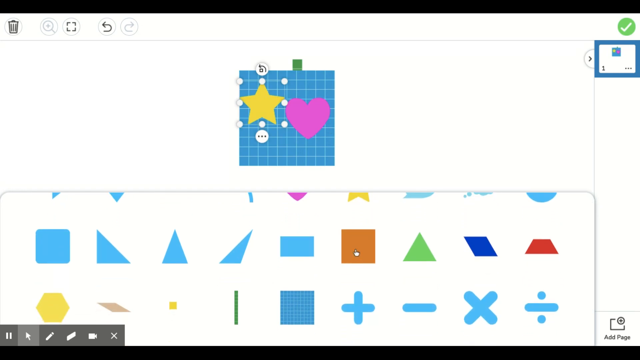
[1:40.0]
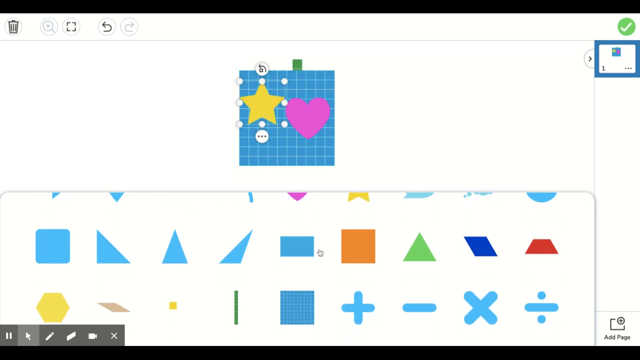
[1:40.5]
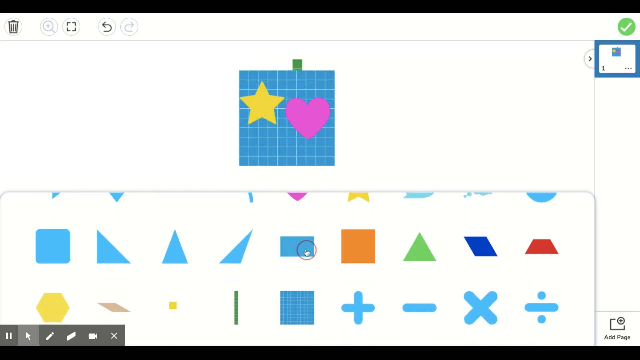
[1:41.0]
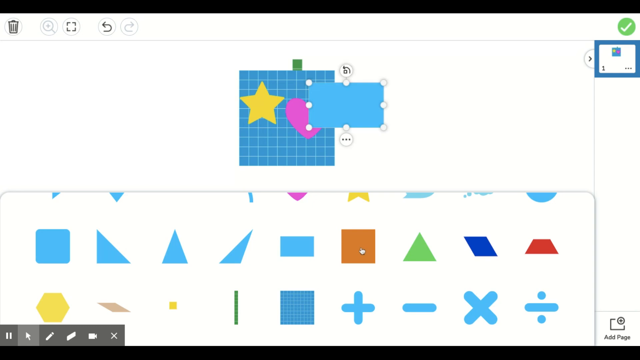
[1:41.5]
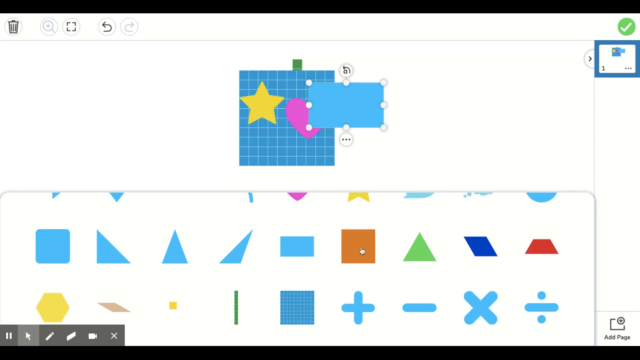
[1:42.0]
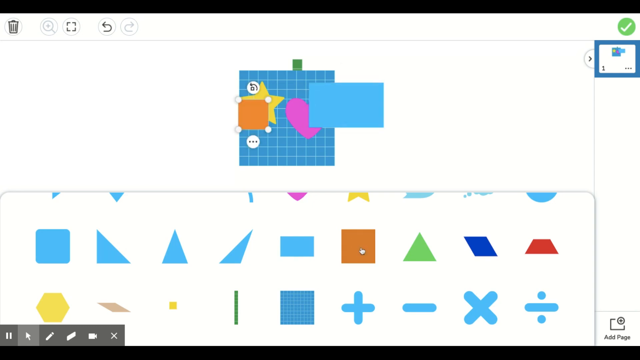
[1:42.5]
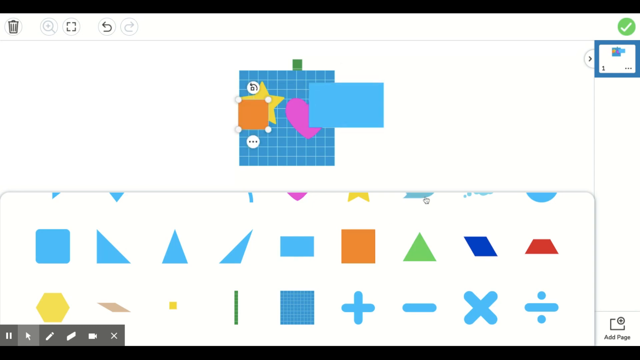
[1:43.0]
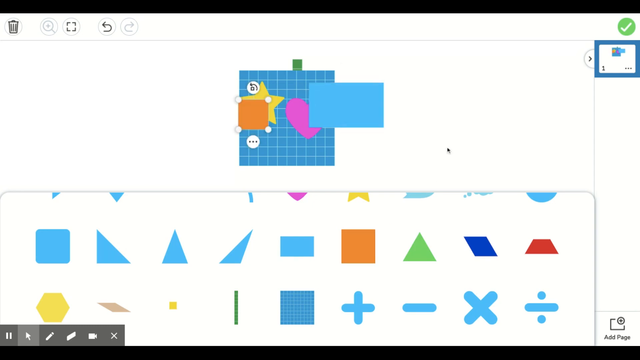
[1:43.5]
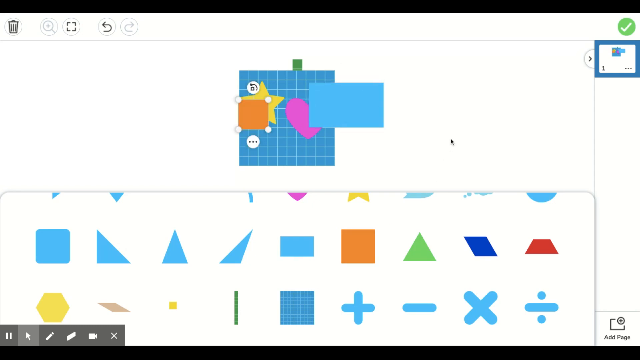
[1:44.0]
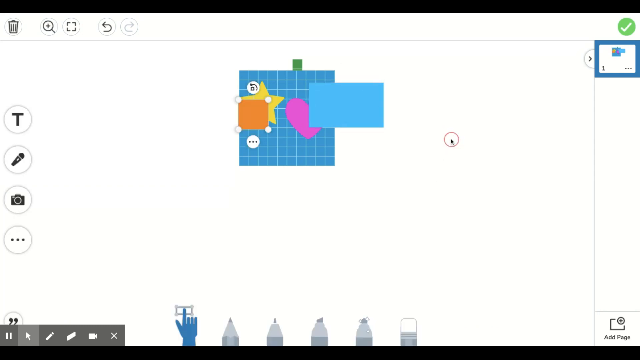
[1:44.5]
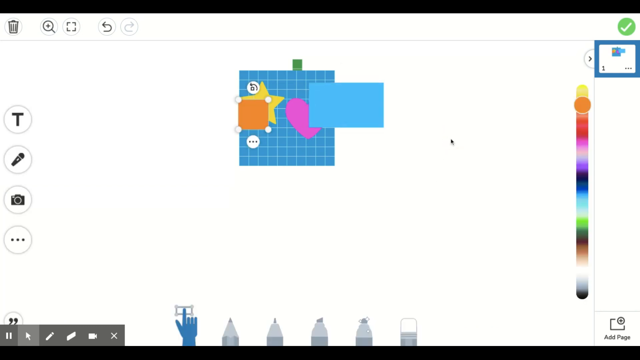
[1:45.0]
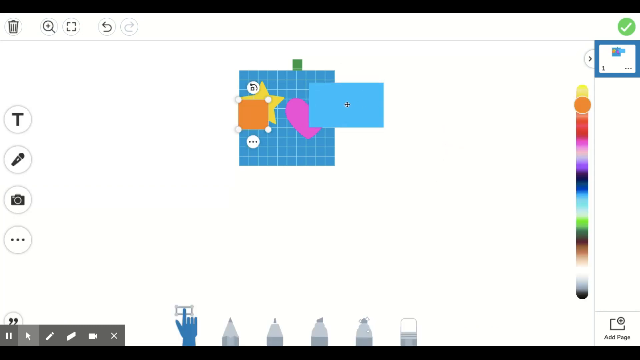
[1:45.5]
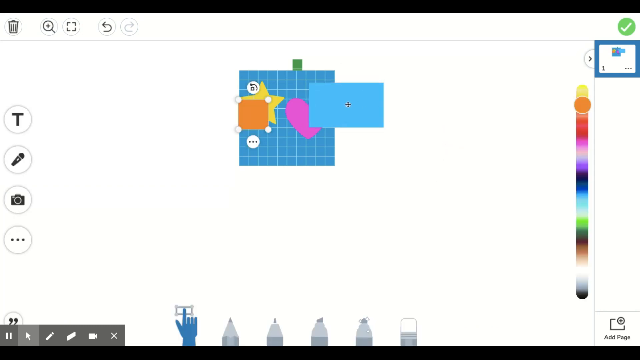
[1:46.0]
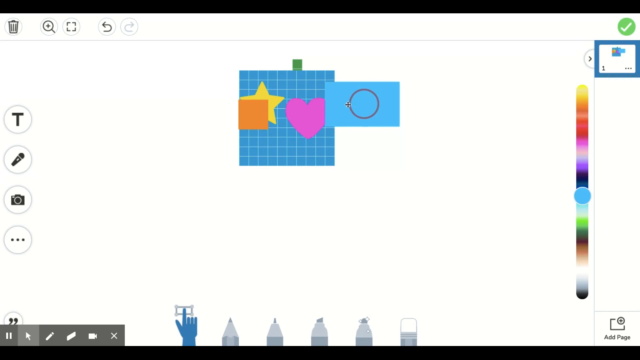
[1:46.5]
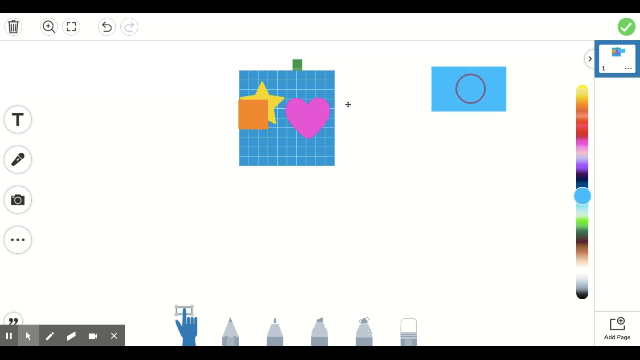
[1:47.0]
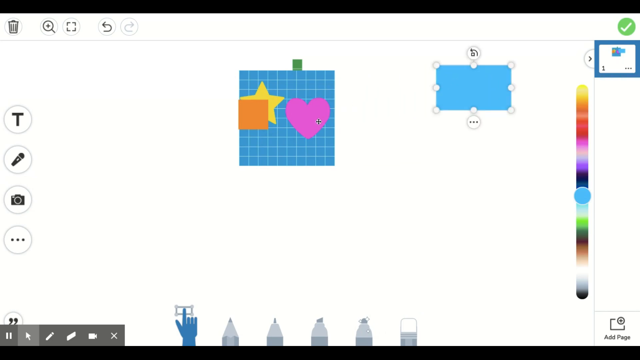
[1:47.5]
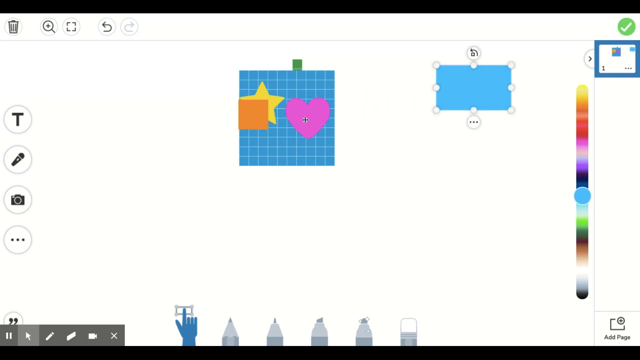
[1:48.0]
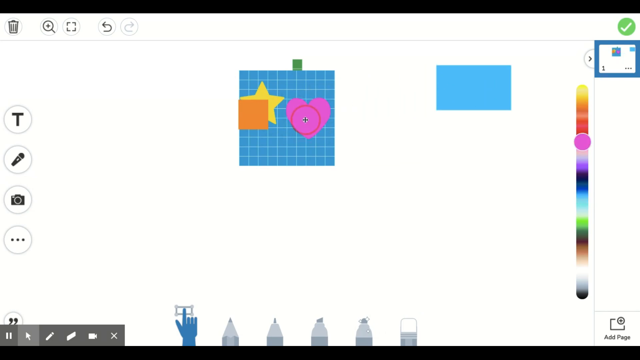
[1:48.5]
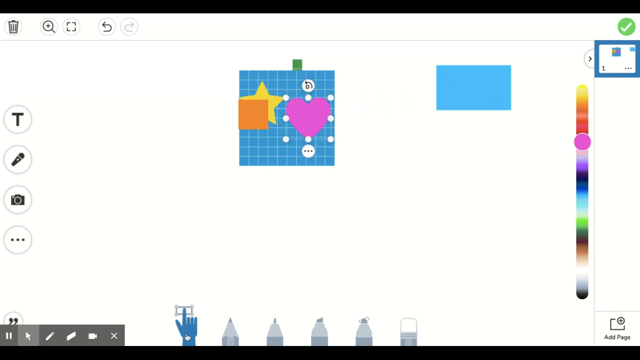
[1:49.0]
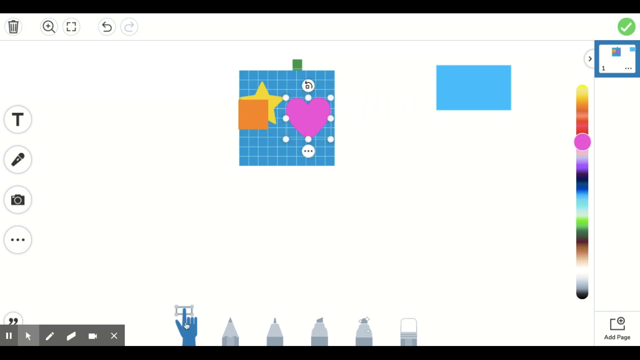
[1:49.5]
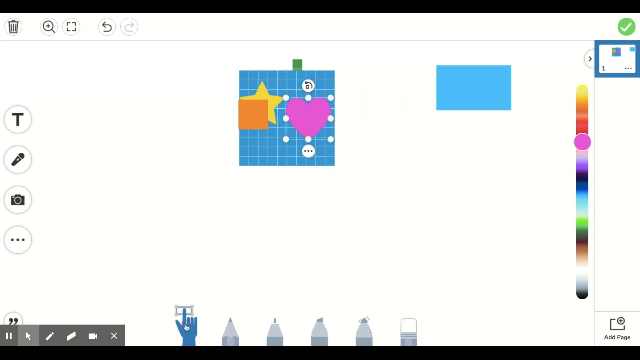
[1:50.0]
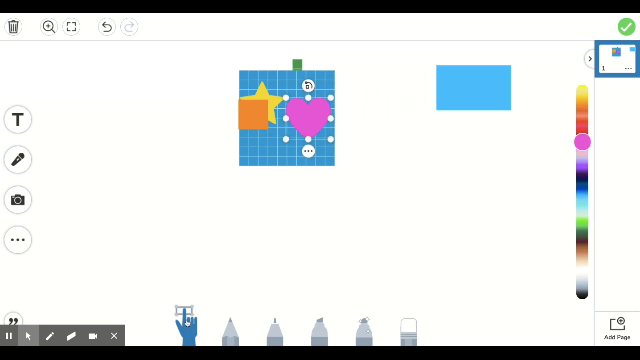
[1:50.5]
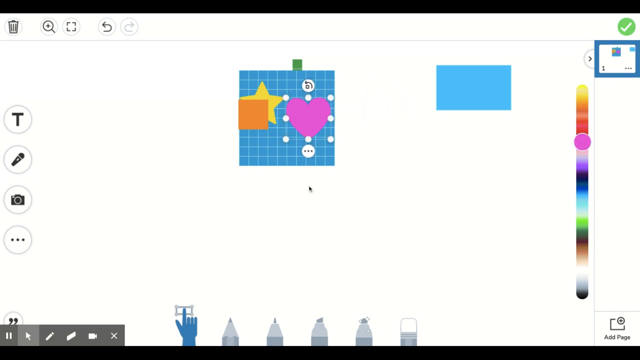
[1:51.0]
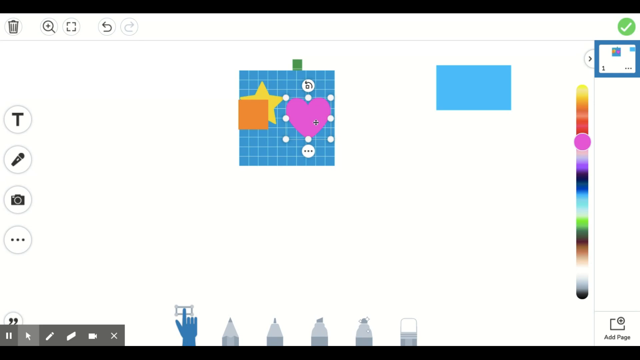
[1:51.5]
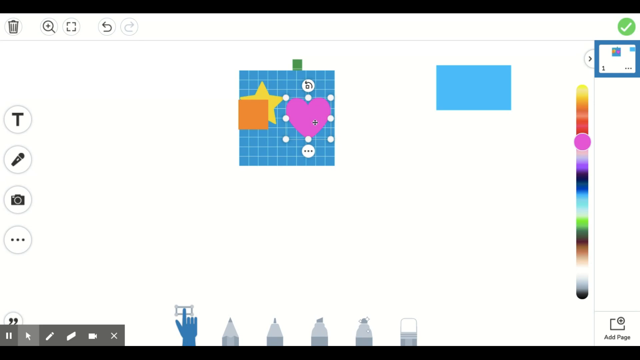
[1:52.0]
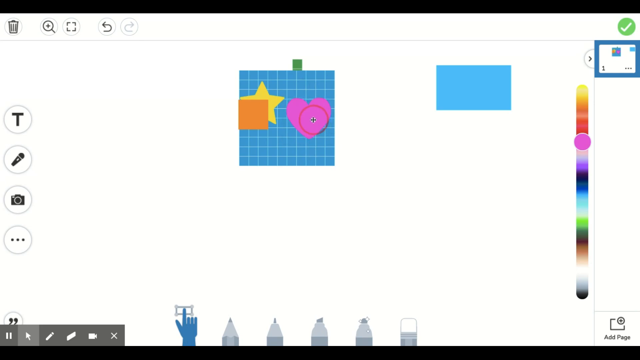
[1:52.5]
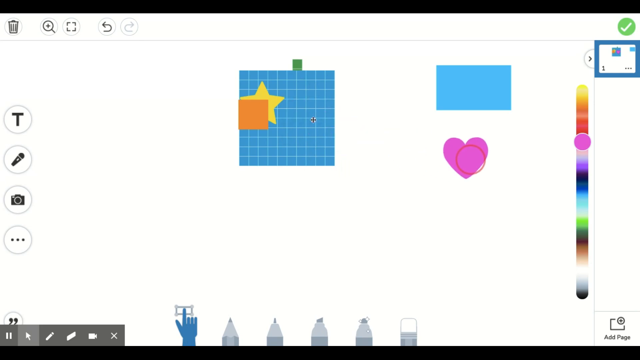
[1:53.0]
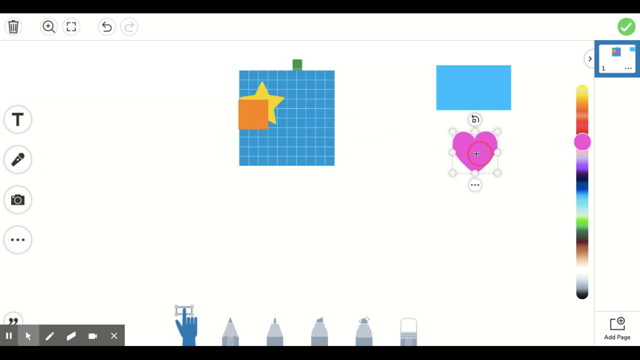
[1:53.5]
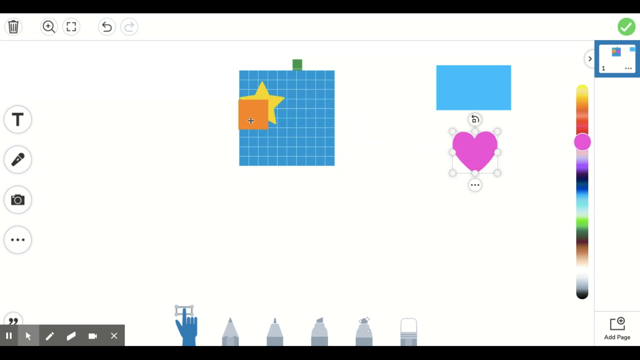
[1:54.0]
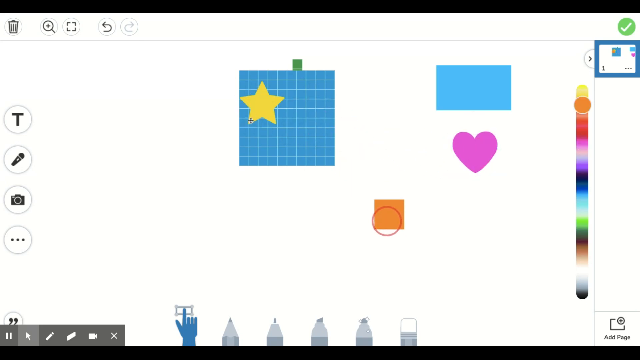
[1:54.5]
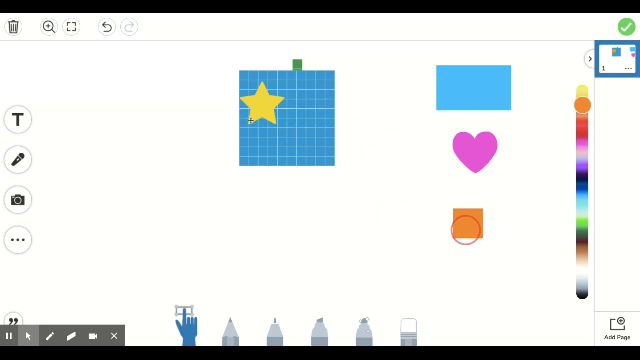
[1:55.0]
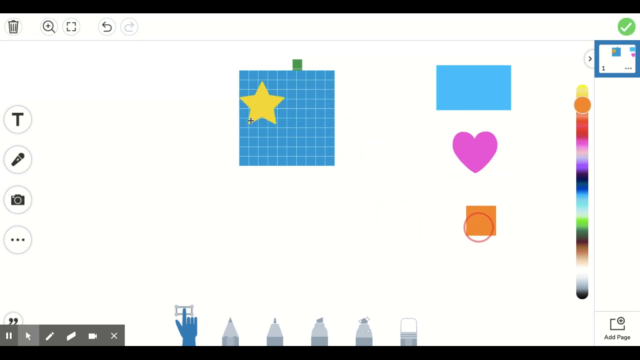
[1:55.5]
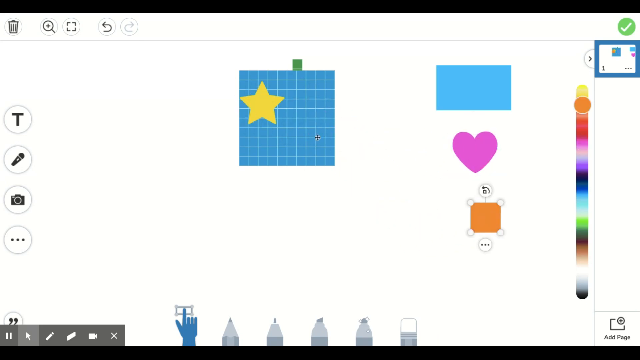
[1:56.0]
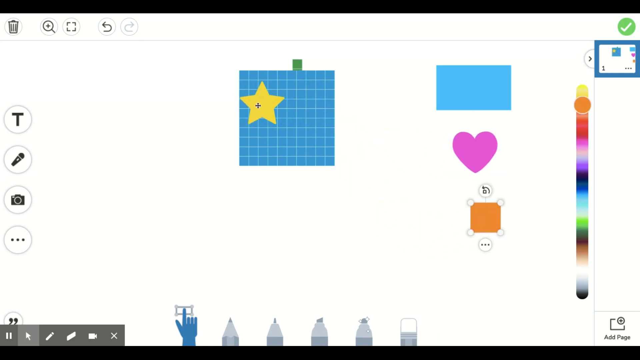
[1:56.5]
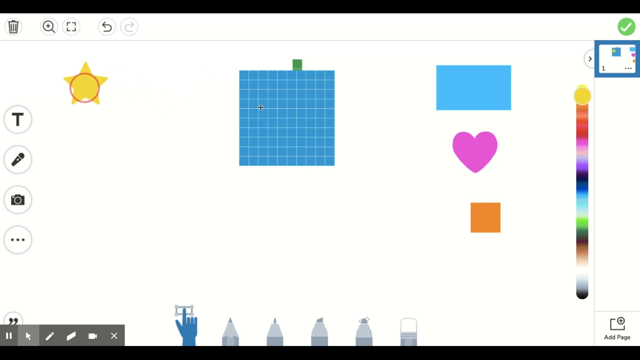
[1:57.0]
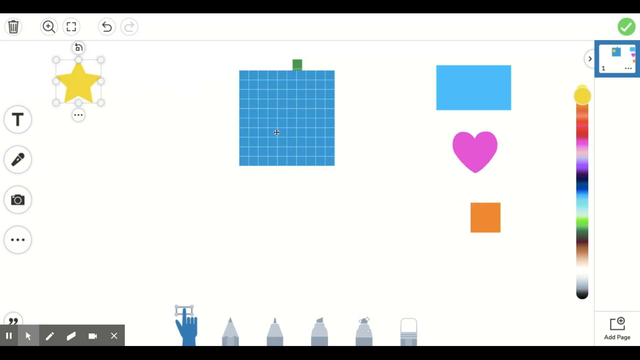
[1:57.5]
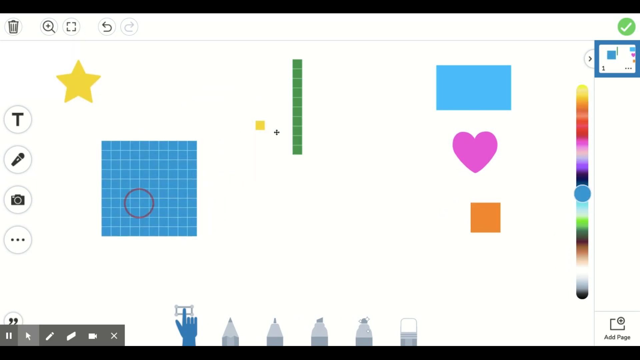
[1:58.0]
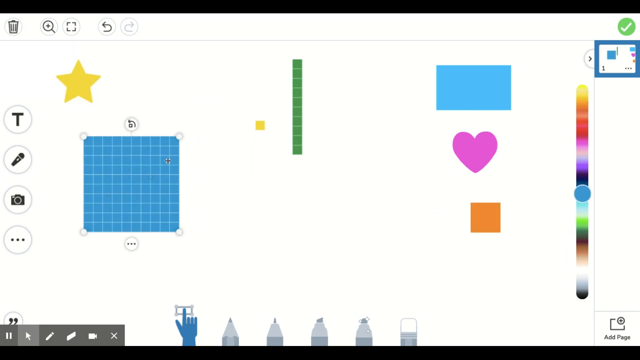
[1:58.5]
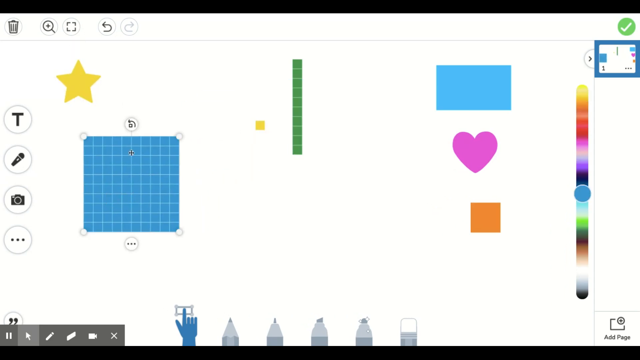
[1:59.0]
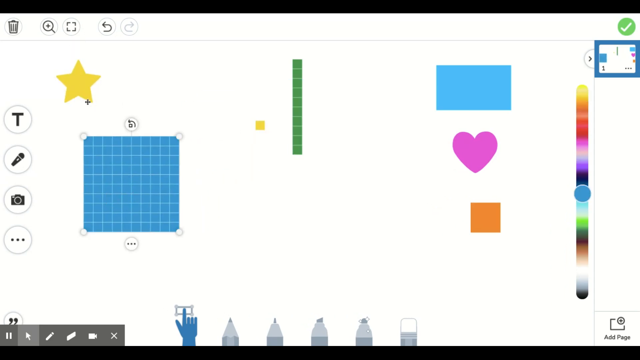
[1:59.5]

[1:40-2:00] A number of shapes in various colors and sizes, including squares, triangles and math shapes, fill the bottom of the screen, and the top half holds a number of shapes including a blue square, a pink heart and a yellow triangle. The yellow triangle is selected and has circles around it to adjust it. The user clicks a number of other shapes from the bottom, including a blue rectangle and an orange square, and these appear at the top as they are clicked. The user then clicks the empty white space at the top, and the shape selection disappears; a color option appears on the right and drawing utensil options appear at the bottom. The user selects and moves various shapes, separating them so that they no longer overlap.